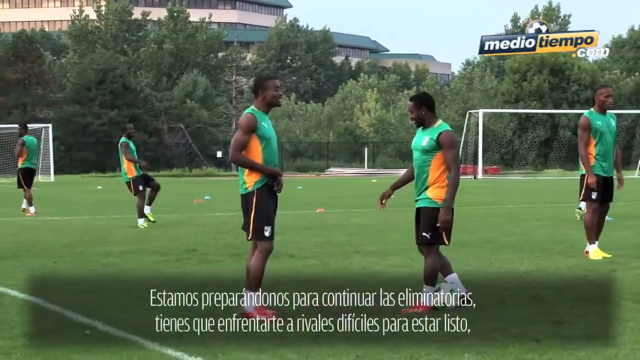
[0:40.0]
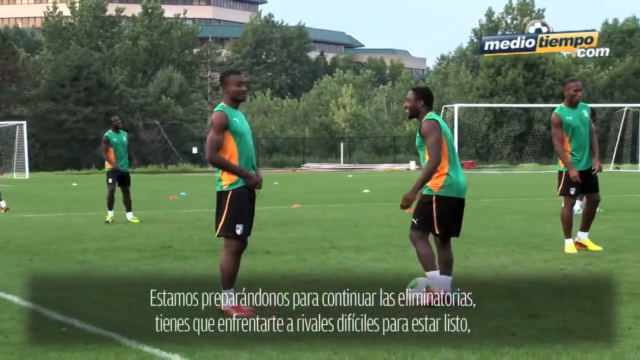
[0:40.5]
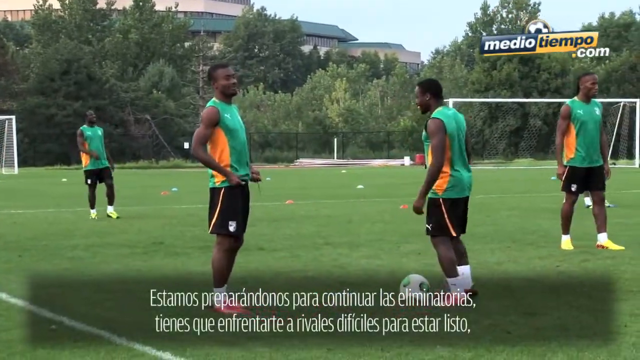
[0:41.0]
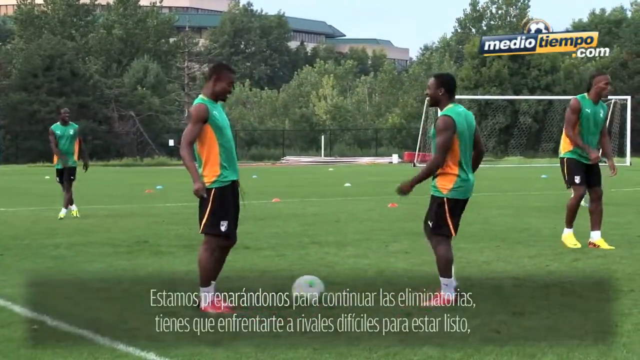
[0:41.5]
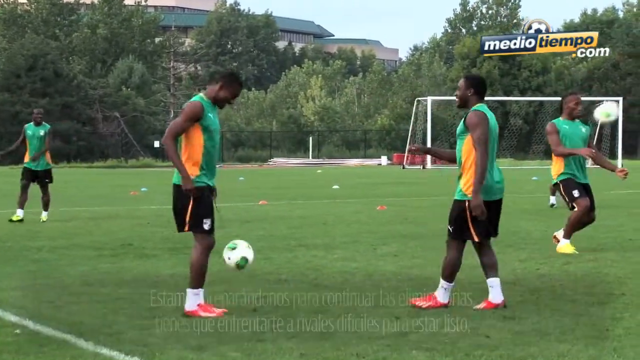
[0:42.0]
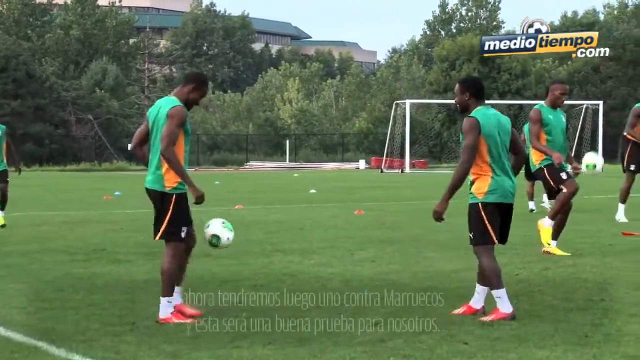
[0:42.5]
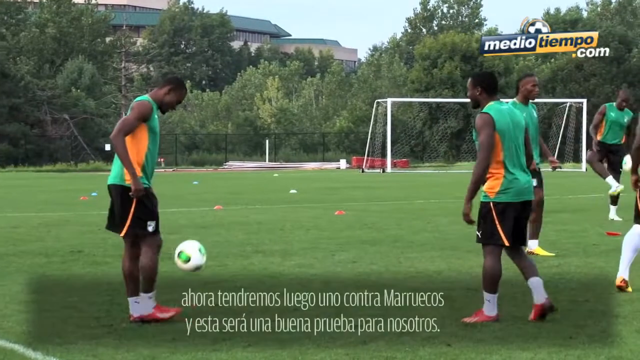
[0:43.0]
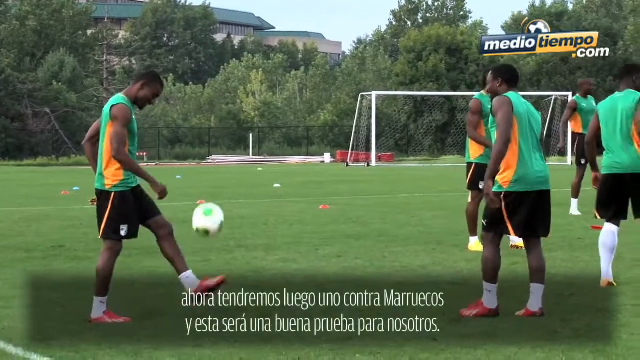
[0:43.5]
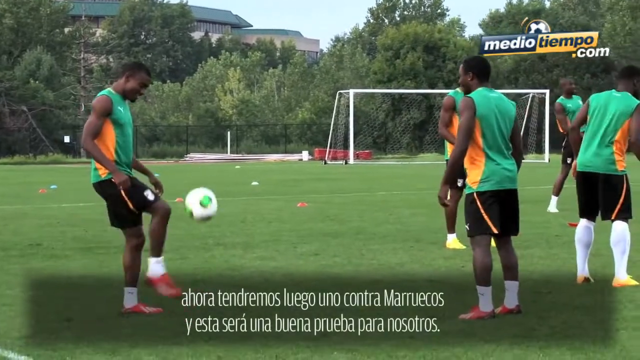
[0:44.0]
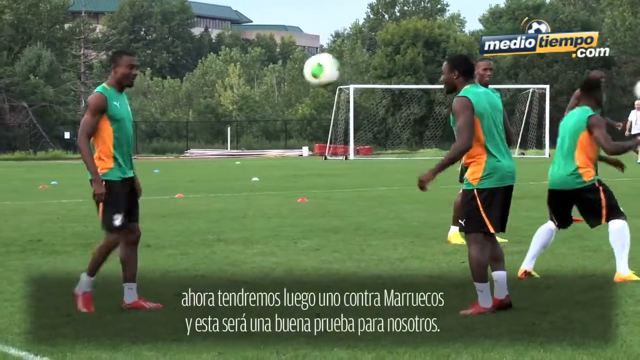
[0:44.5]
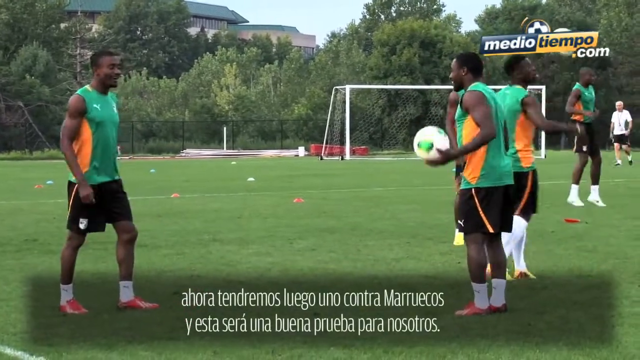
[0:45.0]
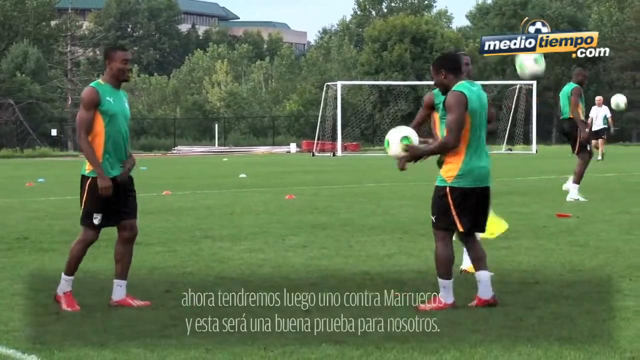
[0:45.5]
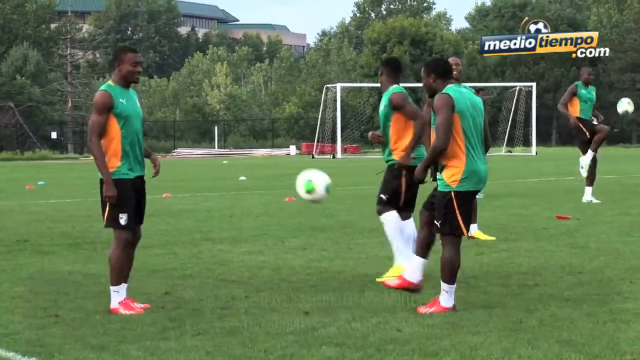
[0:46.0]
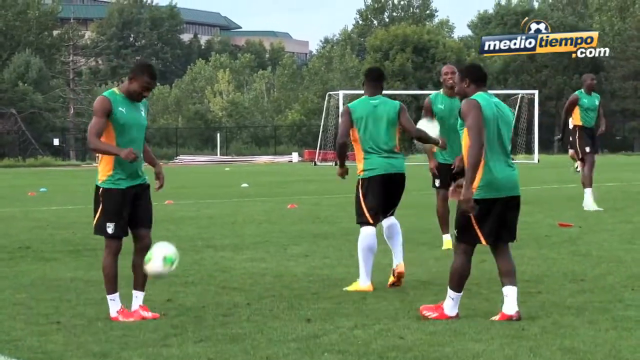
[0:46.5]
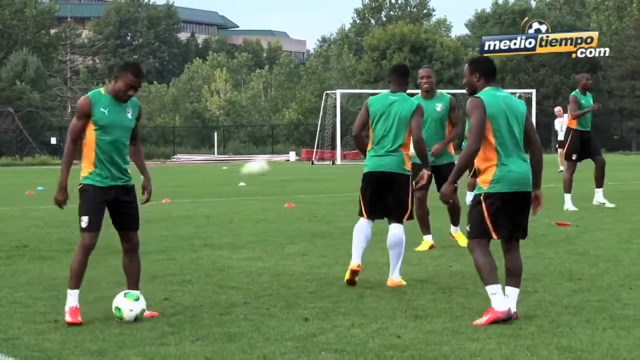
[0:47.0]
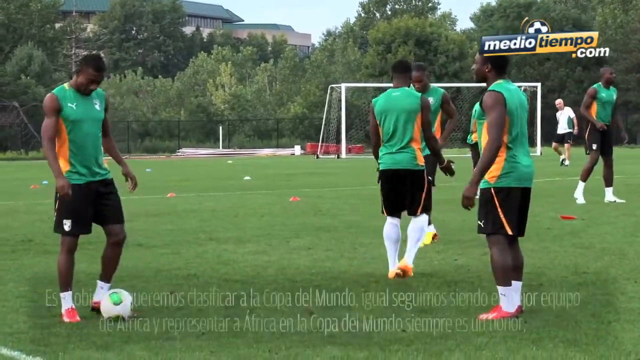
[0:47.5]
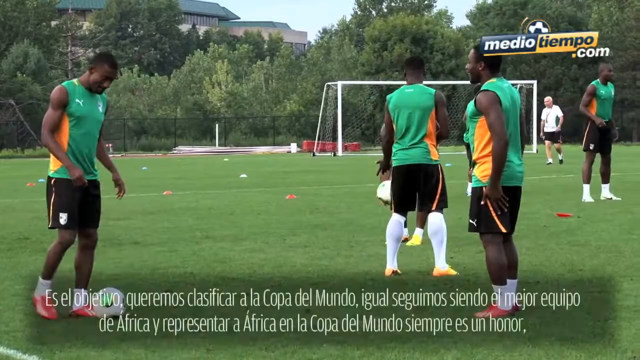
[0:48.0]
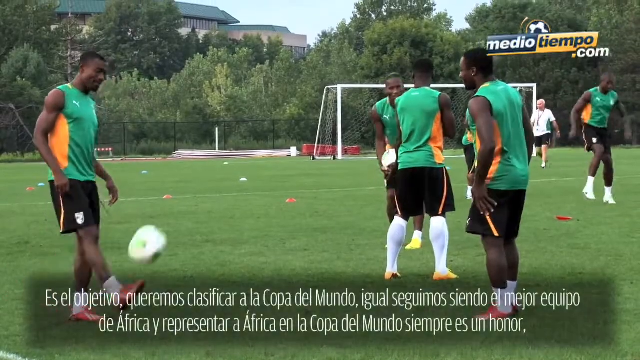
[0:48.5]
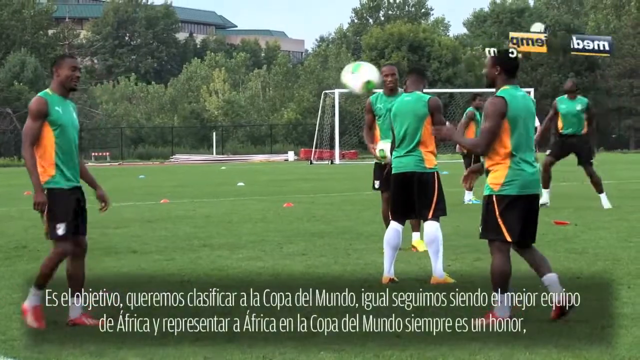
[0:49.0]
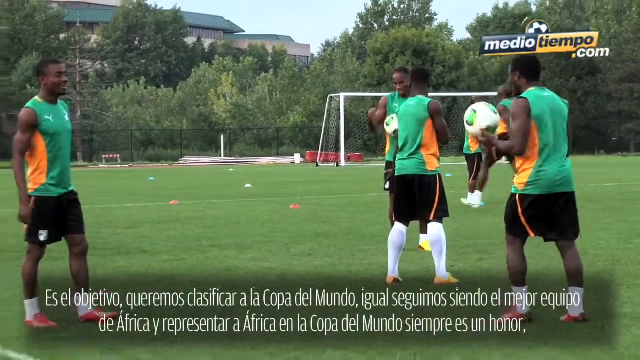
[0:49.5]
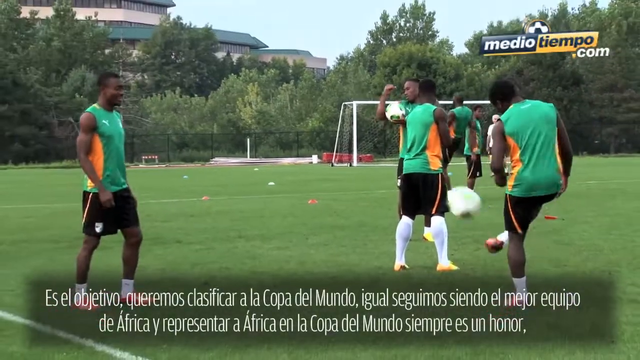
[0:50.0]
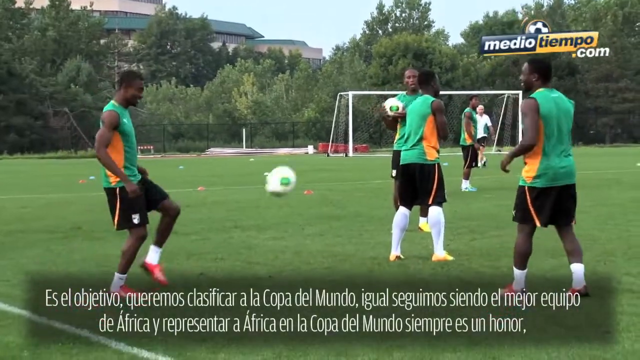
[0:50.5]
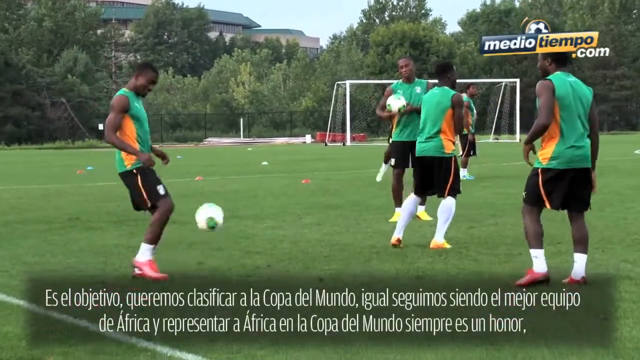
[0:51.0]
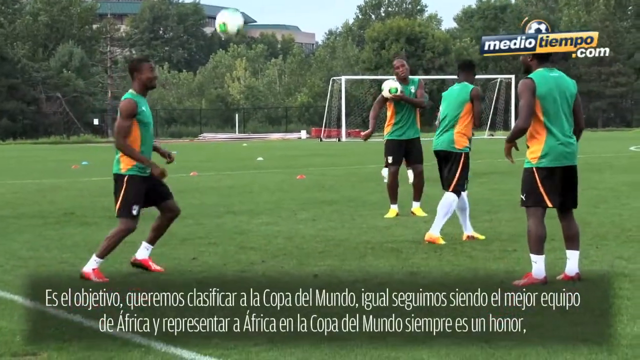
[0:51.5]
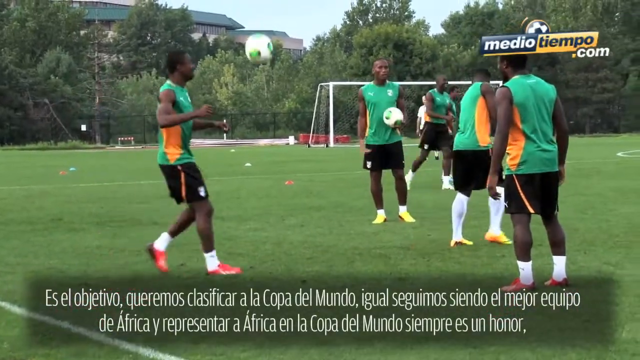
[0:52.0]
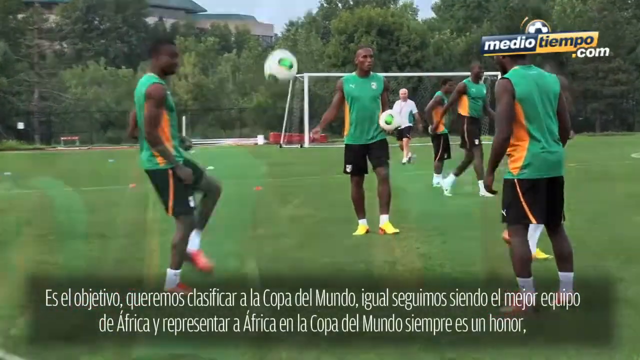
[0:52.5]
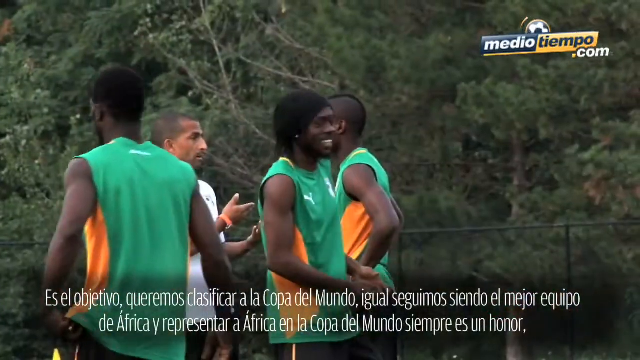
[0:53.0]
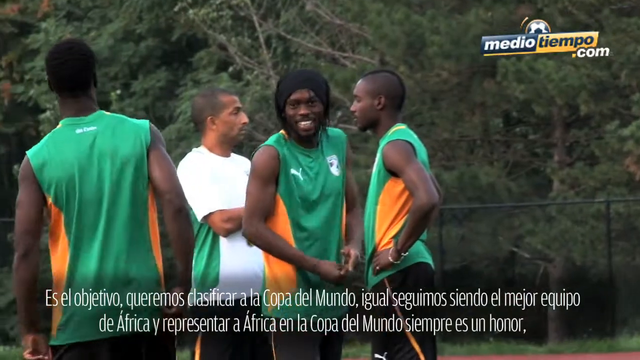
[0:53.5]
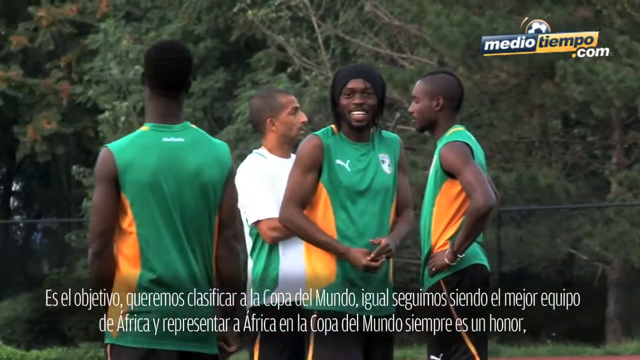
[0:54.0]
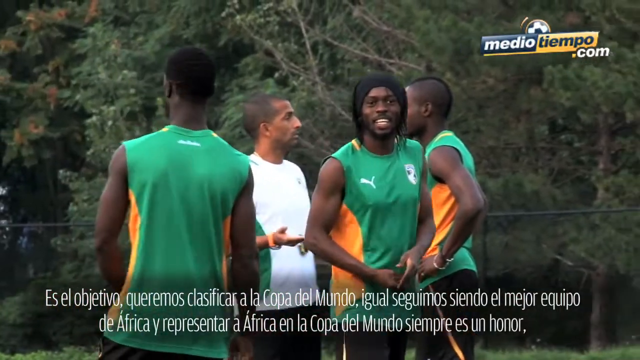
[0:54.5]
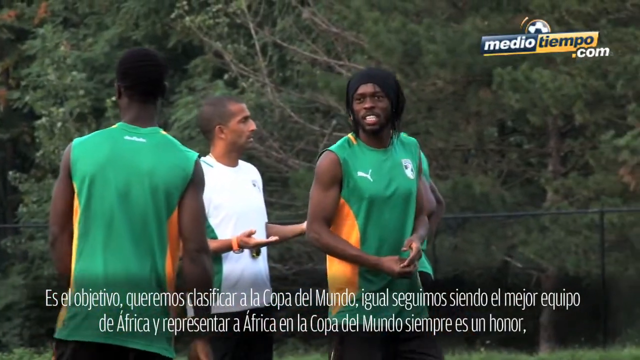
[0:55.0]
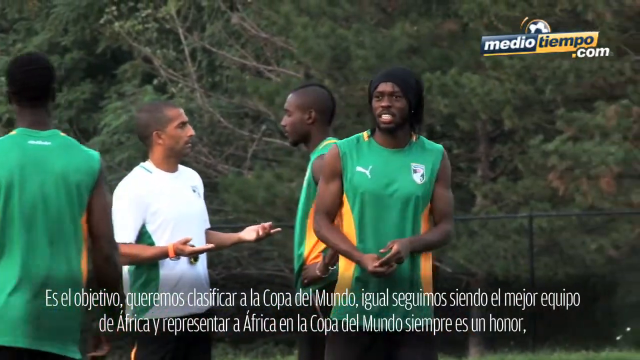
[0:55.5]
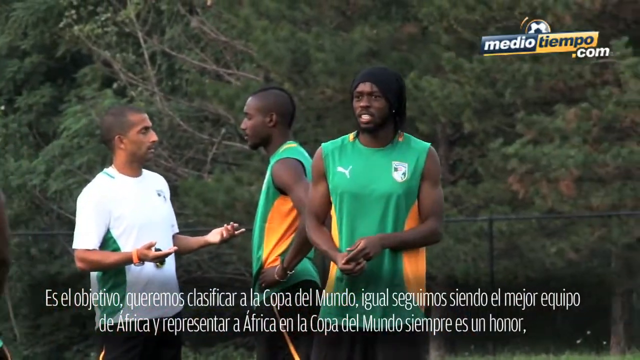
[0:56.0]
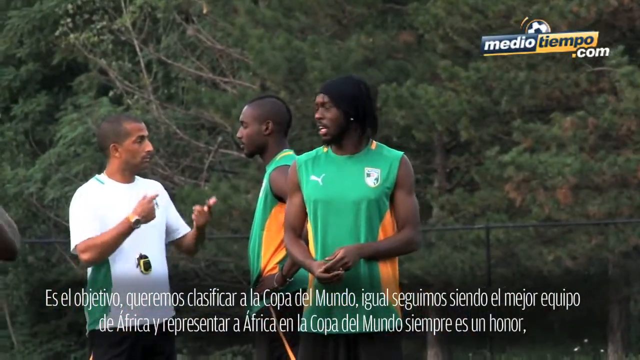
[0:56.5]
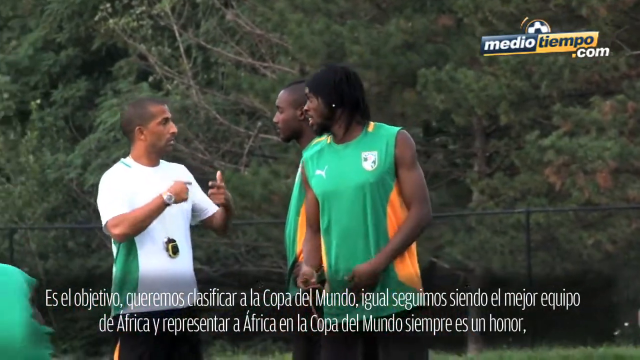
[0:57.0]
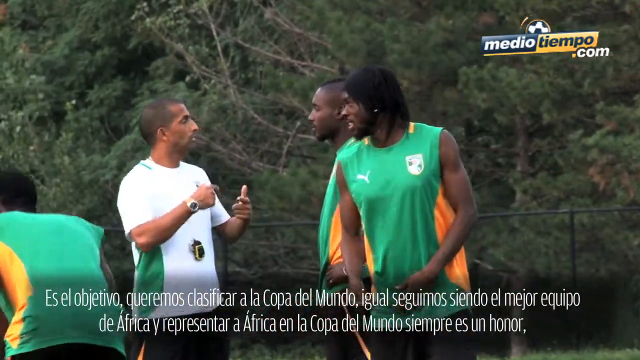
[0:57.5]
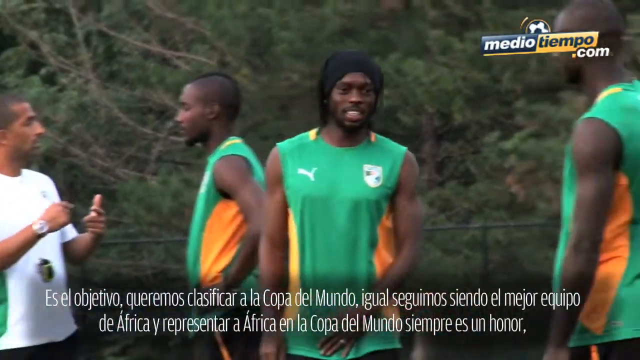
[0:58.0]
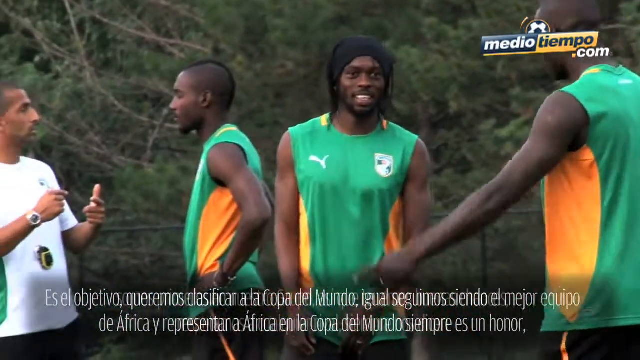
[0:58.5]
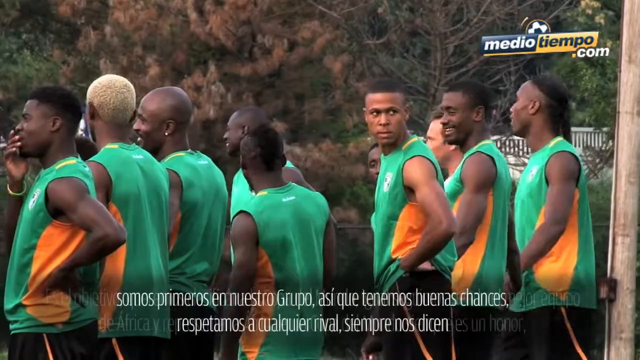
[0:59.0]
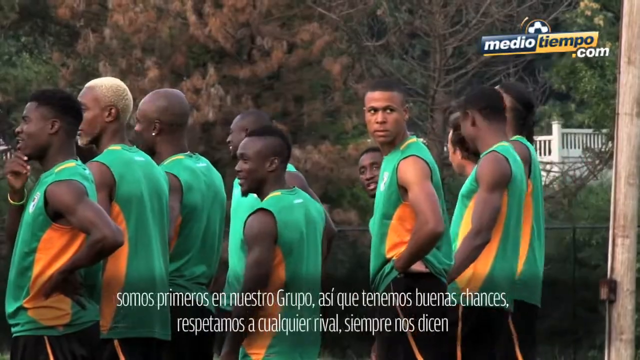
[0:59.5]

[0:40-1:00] Four men are visible on a soccer field. Two men closer to the camera face each other, about four feet apart, by the look of it. They wear green tank tops and appear to be wearing red shoes with white socks. Other men are also on the field, and a bunch of soccer balls are being kicked around. The video then moves to a group of men who look like they are talking; they resemble the men kicking the soccer balls around. One of the men the camera focuses on is looking toward the camera. A man in the background has a white shirt on and looks to be talking to another man wearing the team uniform.